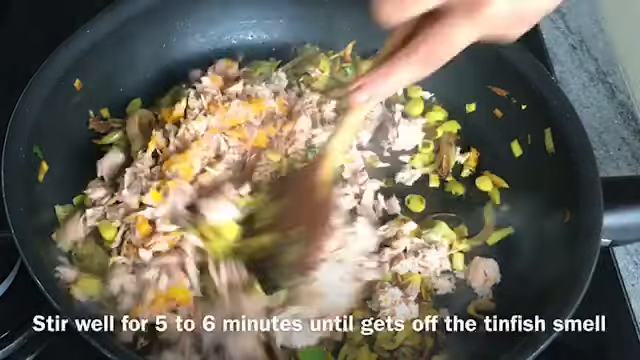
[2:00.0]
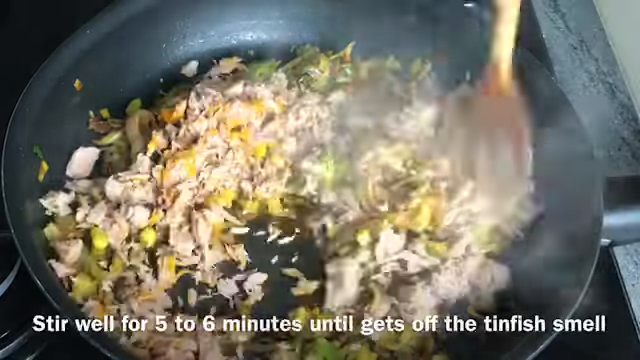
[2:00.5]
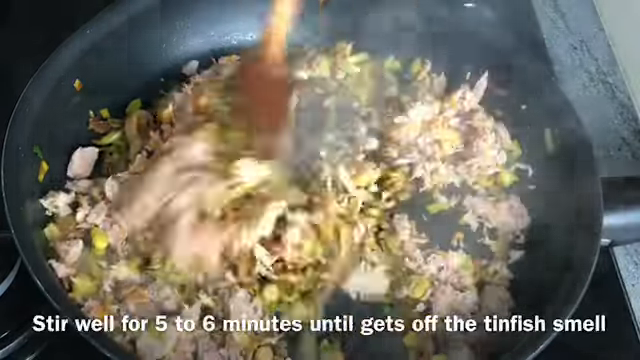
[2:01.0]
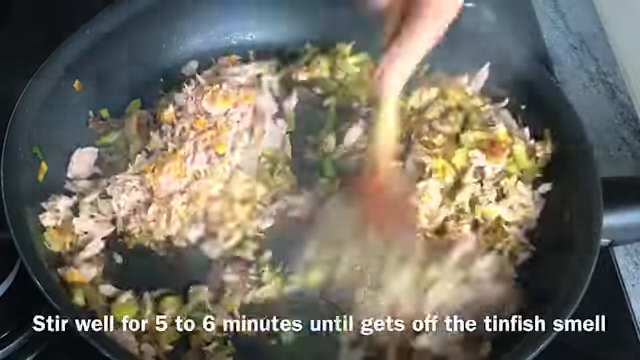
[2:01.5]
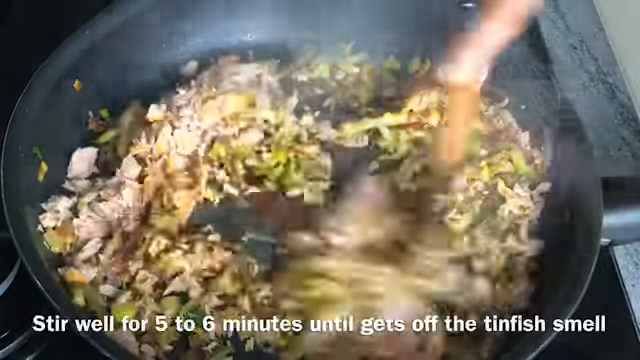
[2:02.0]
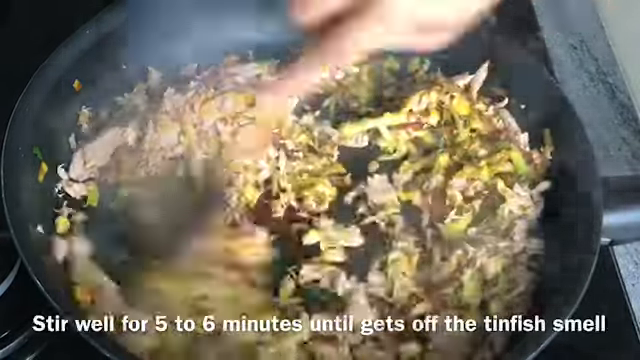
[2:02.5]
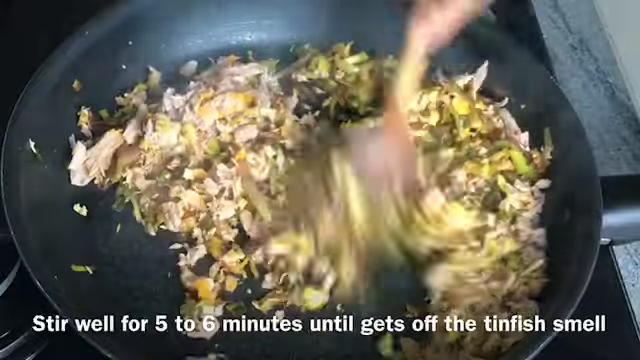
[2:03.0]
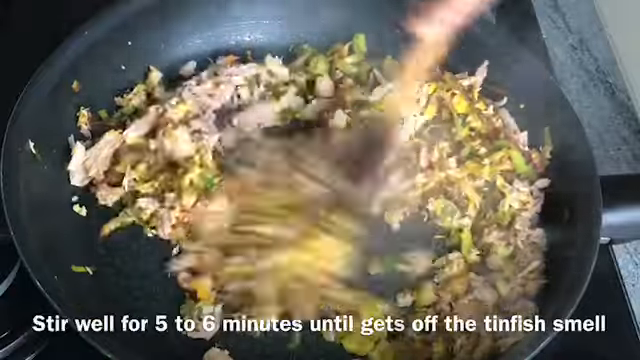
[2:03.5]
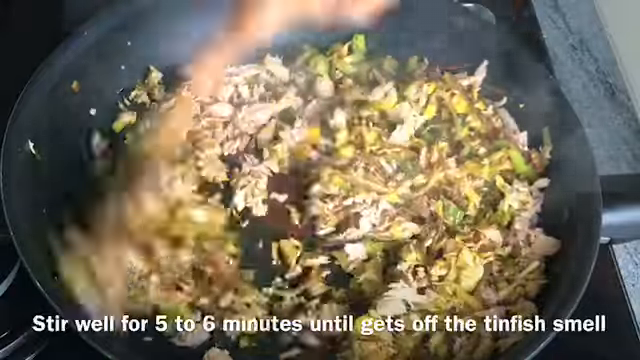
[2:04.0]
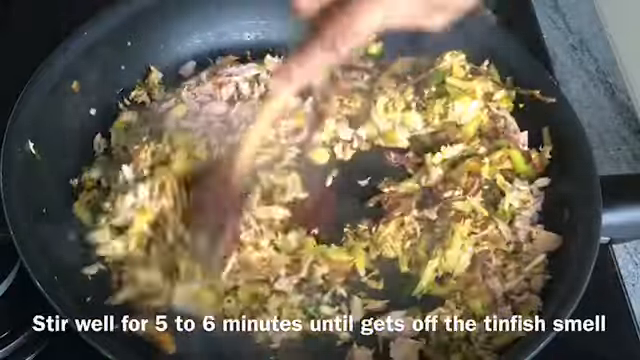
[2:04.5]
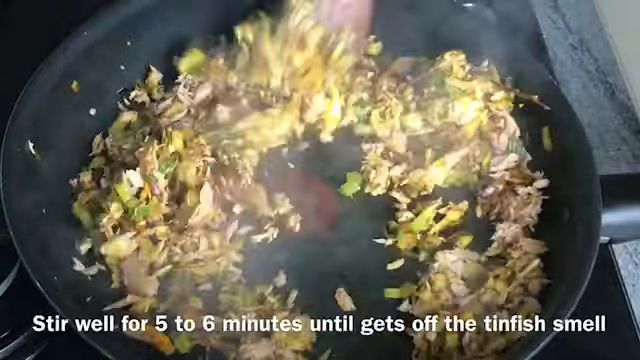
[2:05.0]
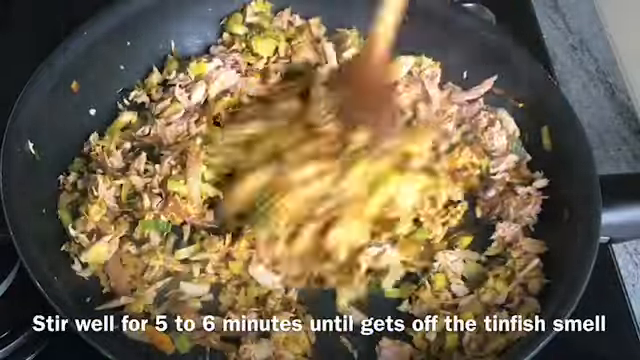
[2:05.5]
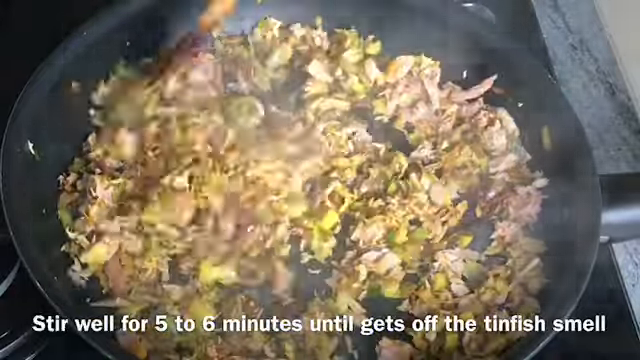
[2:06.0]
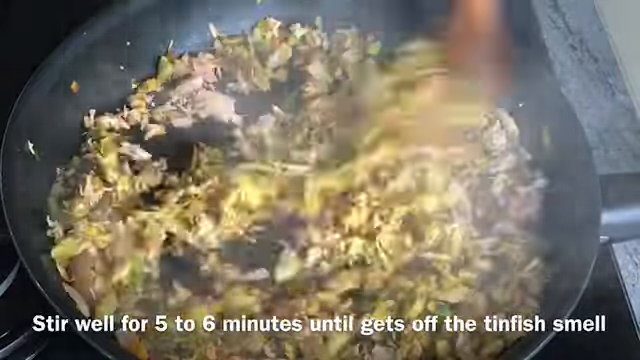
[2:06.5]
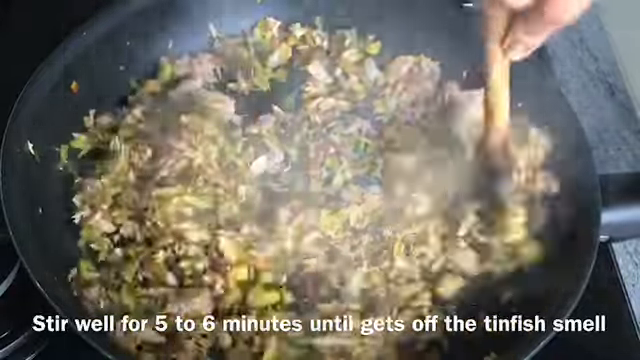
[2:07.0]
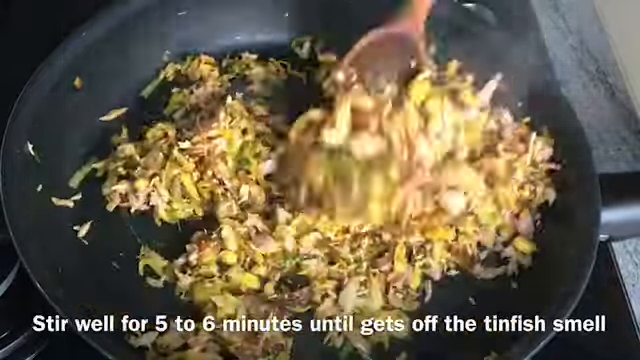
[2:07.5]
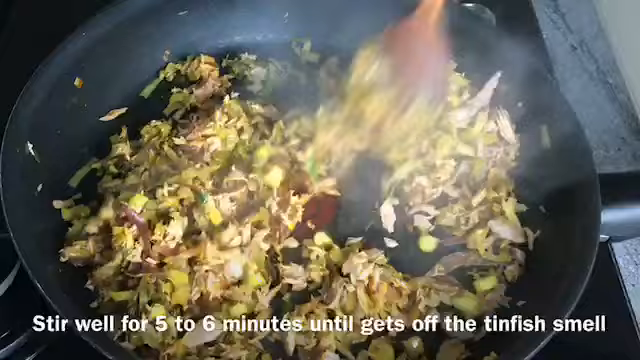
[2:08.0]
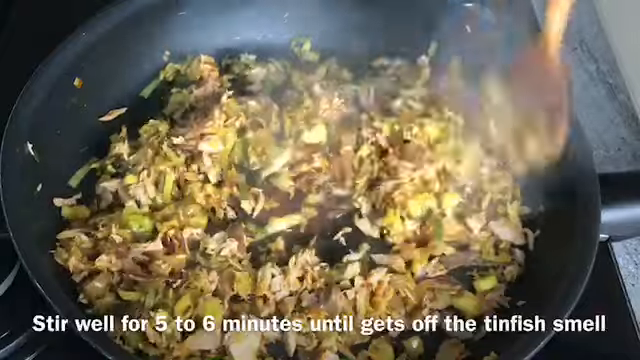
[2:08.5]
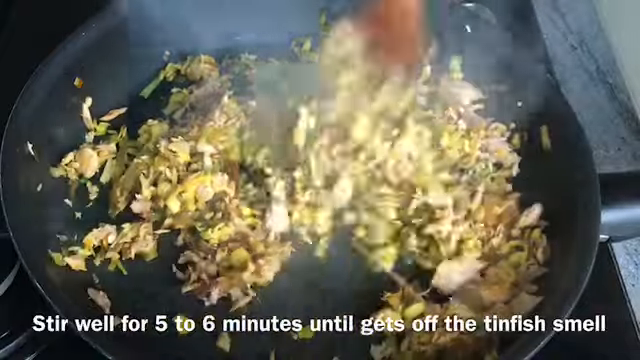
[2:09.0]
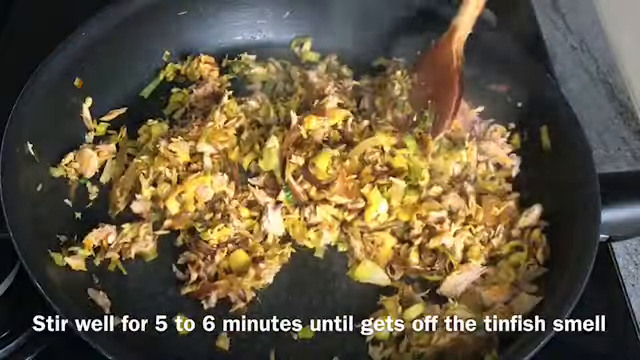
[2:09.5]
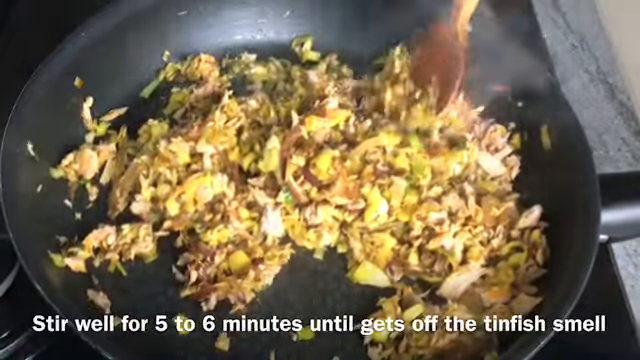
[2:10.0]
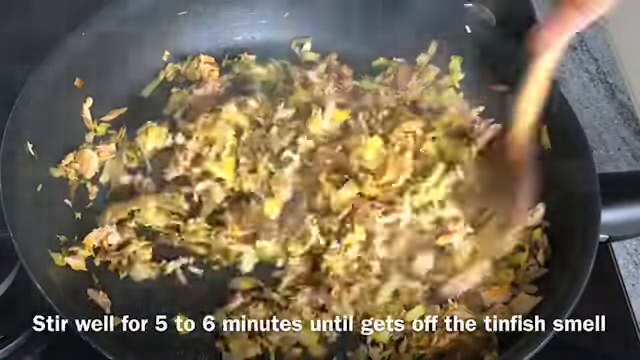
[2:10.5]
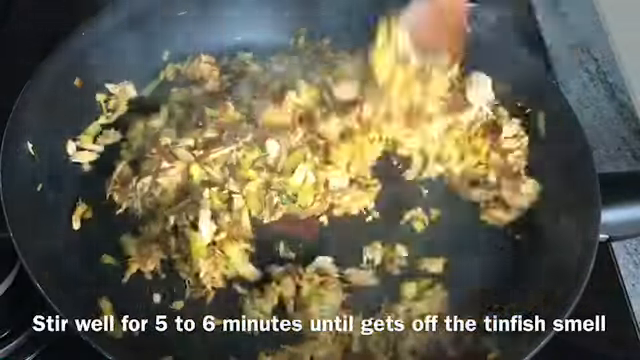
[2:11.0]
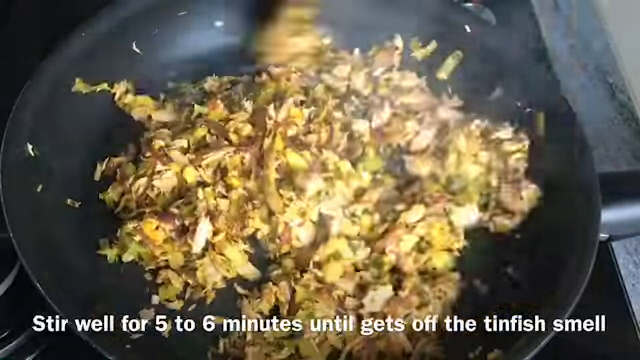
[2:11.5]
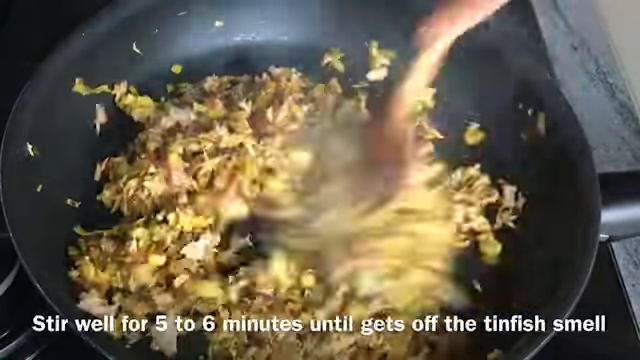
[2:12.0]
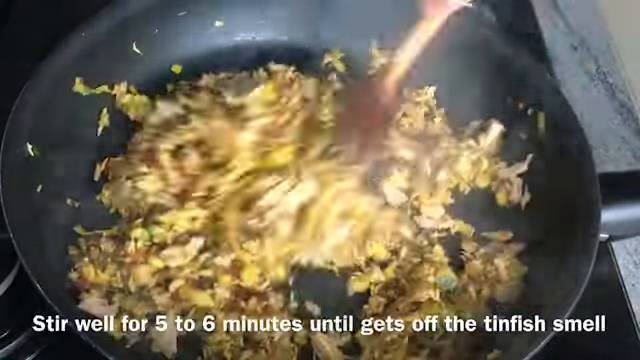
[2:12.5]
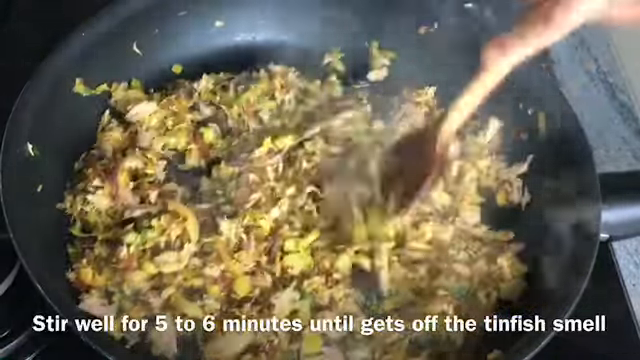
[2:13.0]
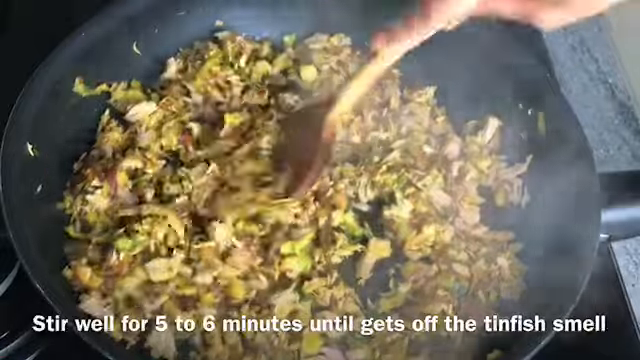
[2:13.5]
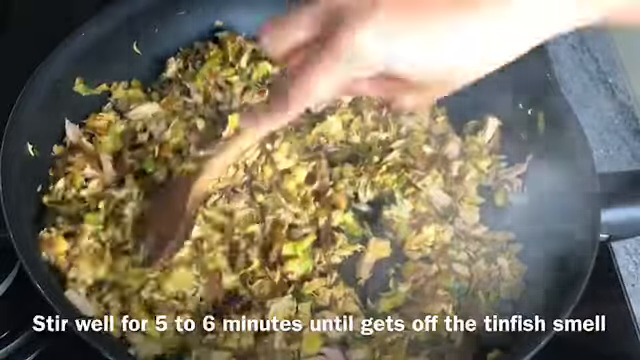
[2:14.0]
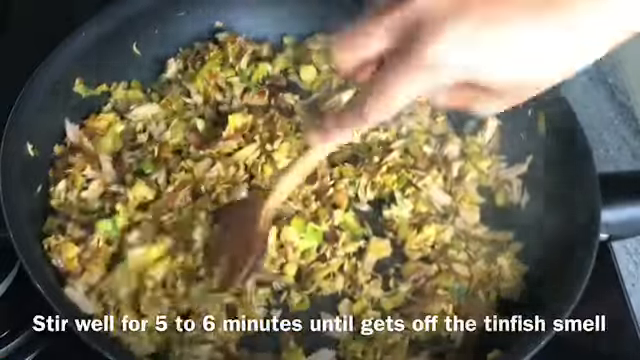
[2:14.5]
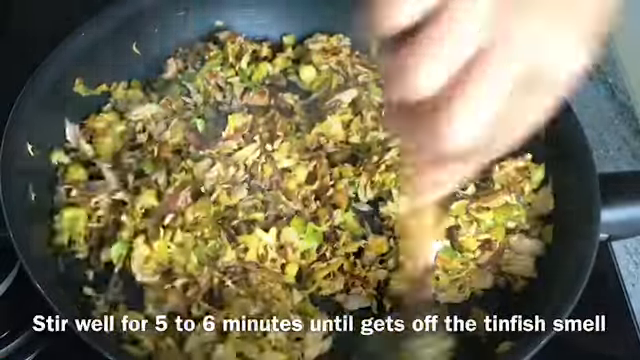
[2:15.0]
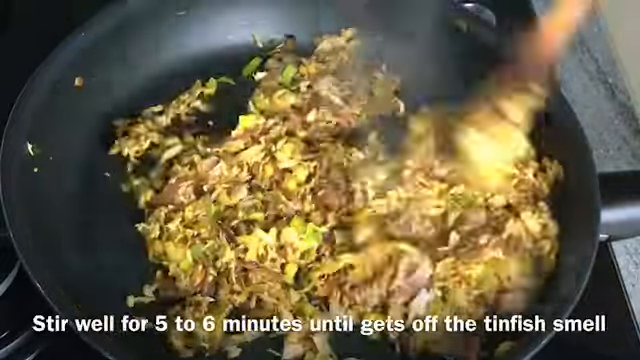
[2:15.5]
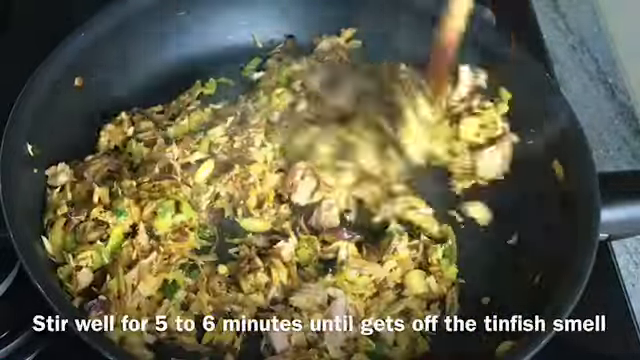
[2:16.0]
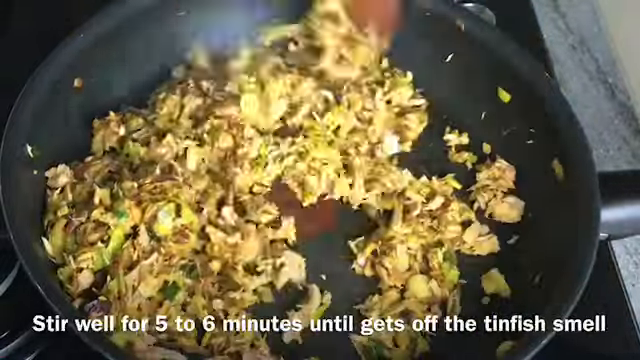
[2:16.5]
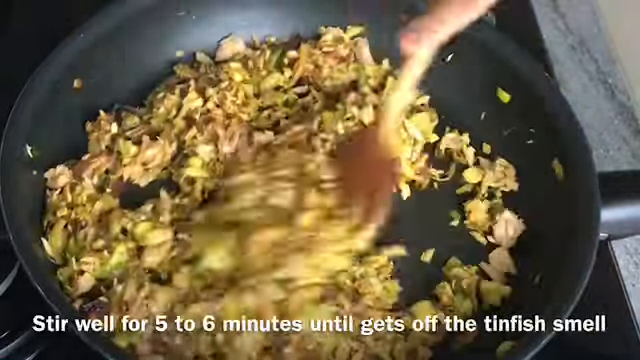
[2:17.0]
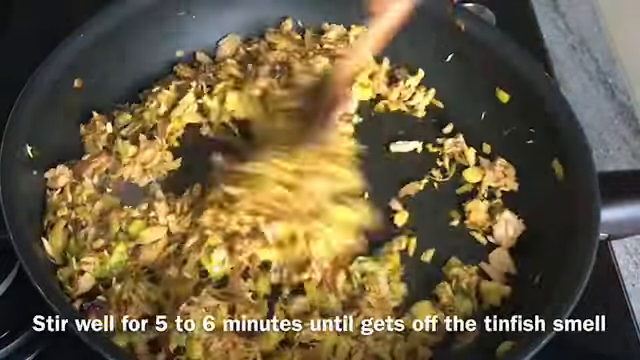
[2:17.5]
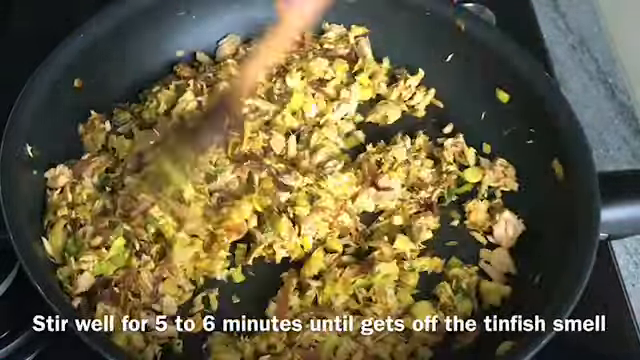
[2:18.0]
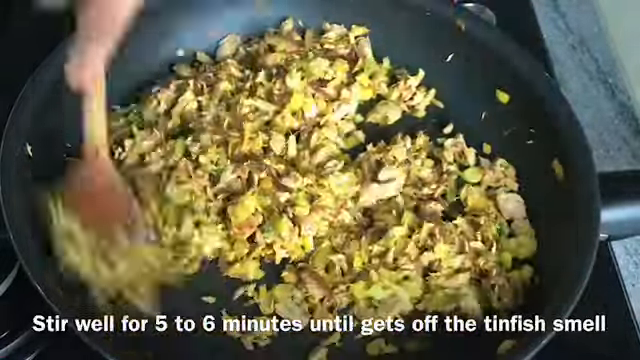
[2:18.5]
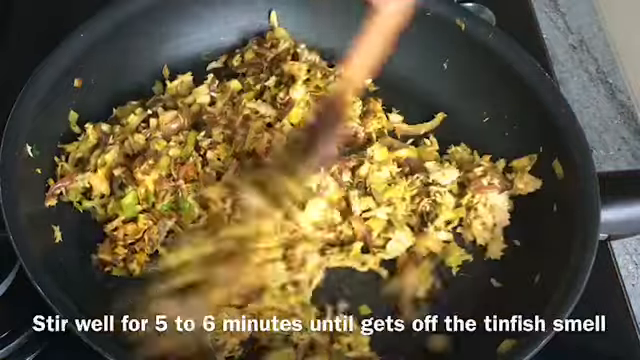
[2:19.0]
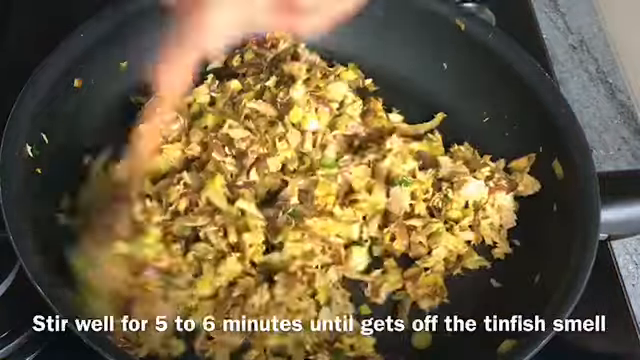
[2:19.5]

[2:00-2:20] Text reads "Stir well for five to six minutes until it gets off the tinfish smell." The garlic, spices, onions, leeks and tin fish are stirred together in the same frying pan with a wooden spoon, the hand visible on the spoon. The stirring goes circularly around the edge of the pan every so often to bring everything into the middle, and back and forth to incorporate everything. At first more of the fish is visible, and it becomes more incorporated over time; its color changes a tiny bit from maybe pinker to white. Everything looks steamy and soft, not mushy, and appears almost done. The spoon taps various areas, apparently to fluff the food up.